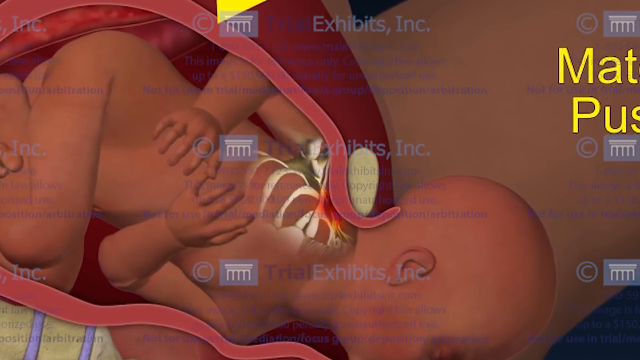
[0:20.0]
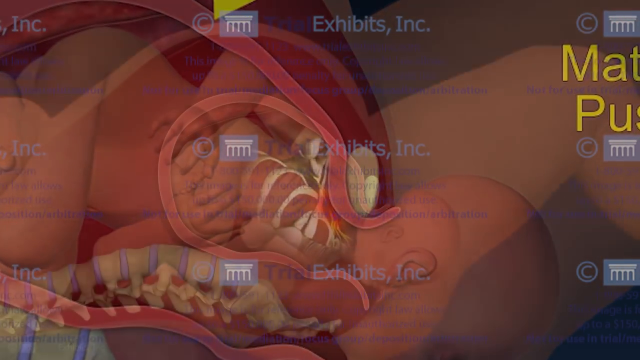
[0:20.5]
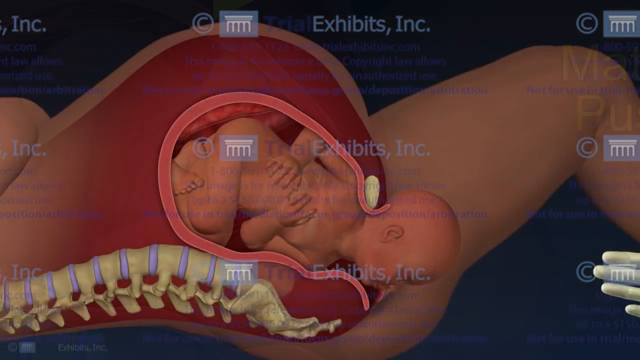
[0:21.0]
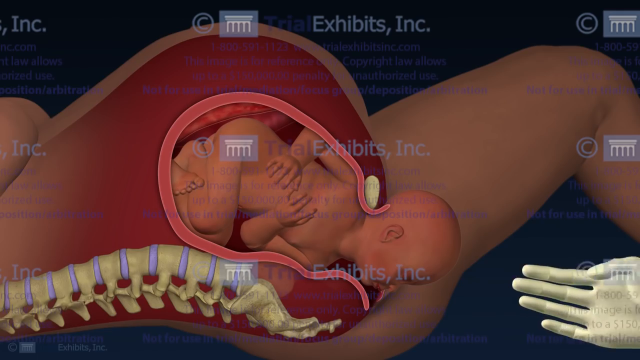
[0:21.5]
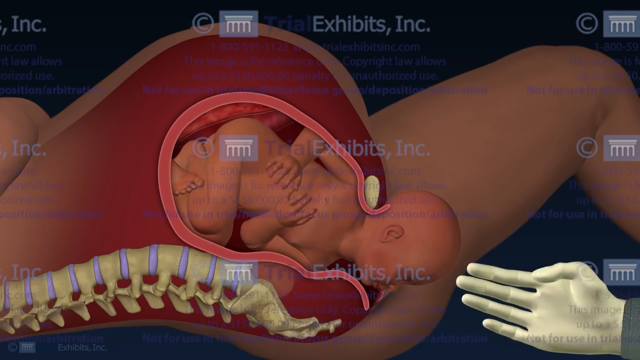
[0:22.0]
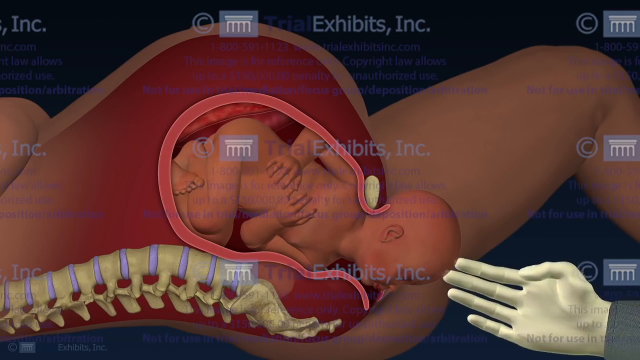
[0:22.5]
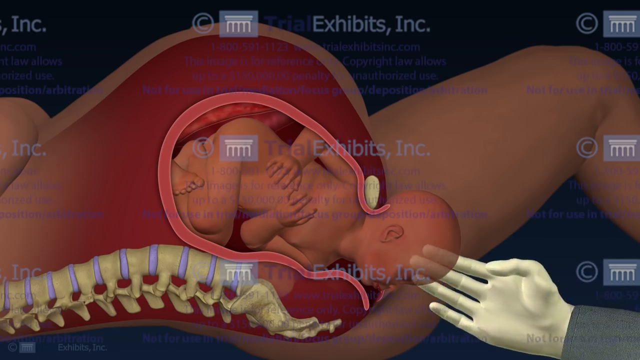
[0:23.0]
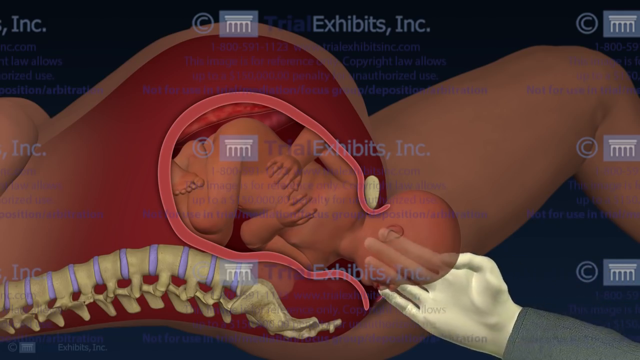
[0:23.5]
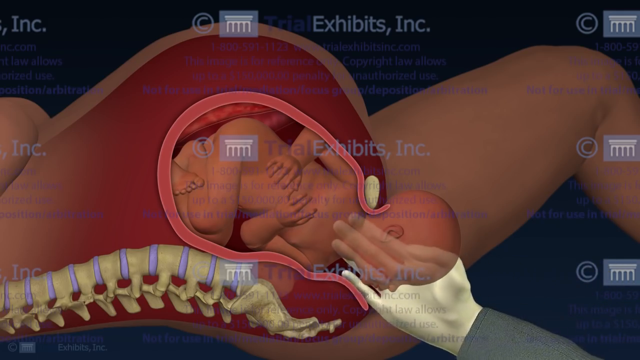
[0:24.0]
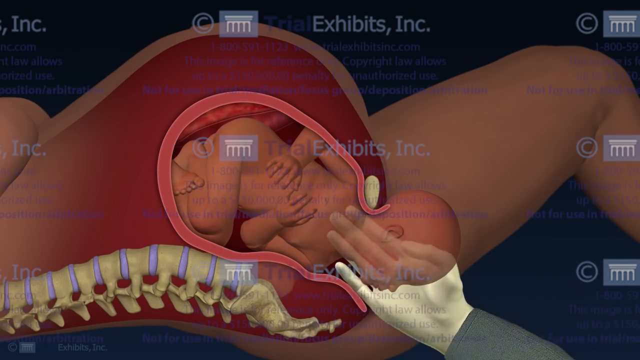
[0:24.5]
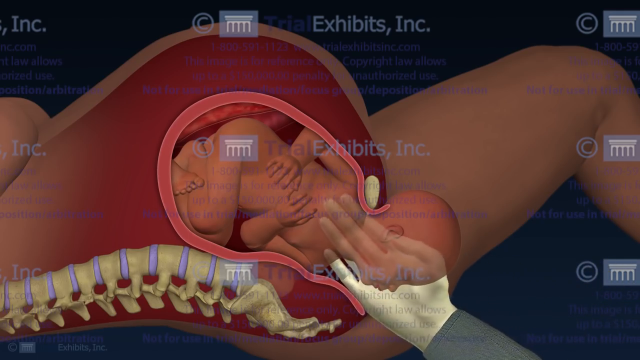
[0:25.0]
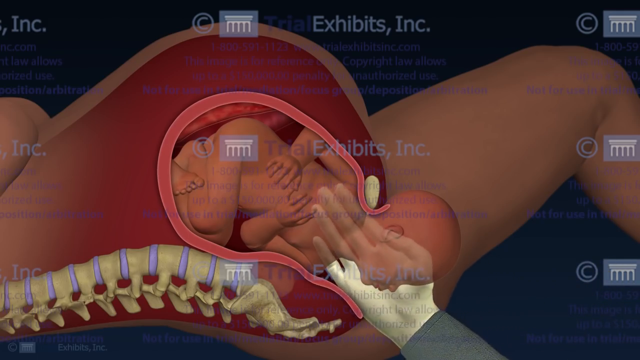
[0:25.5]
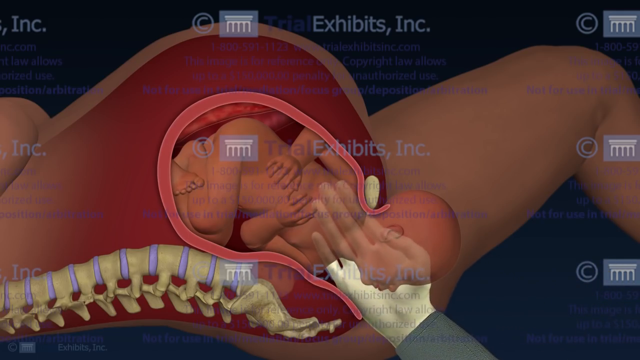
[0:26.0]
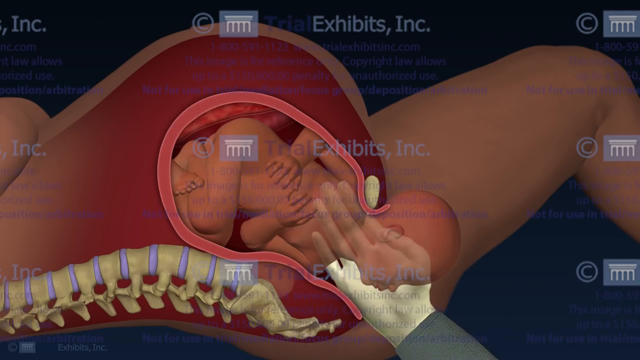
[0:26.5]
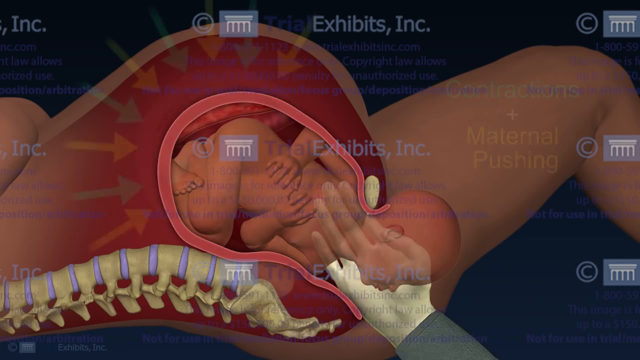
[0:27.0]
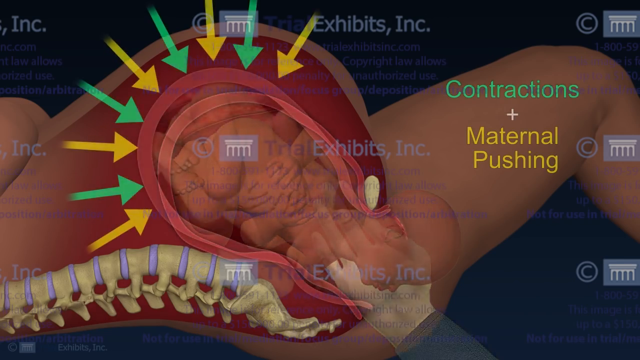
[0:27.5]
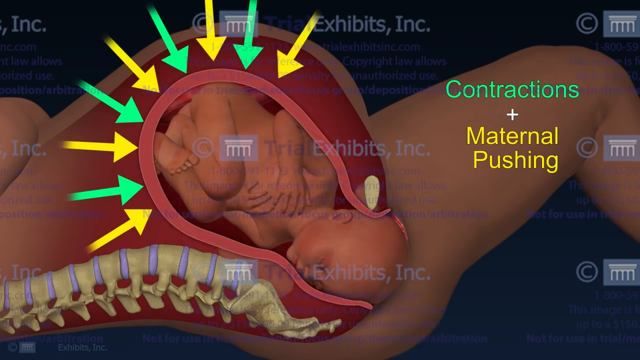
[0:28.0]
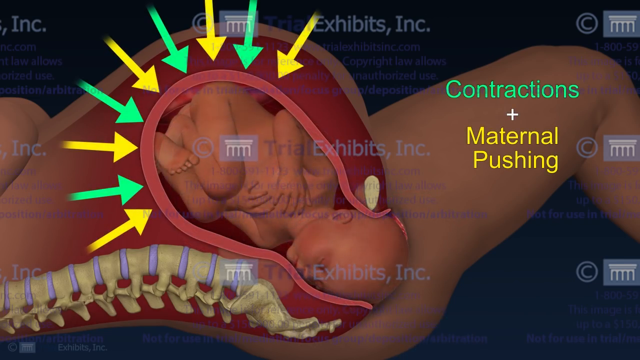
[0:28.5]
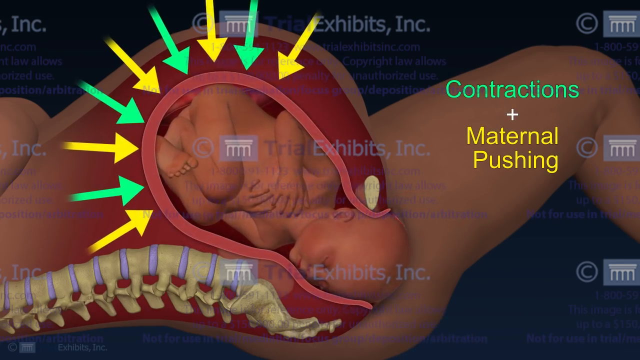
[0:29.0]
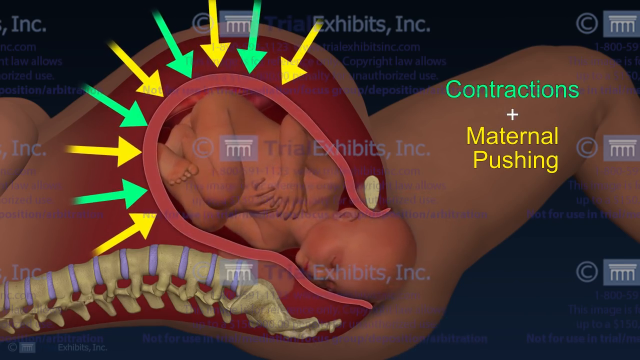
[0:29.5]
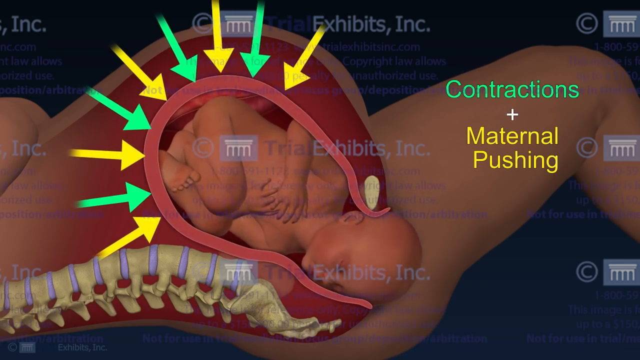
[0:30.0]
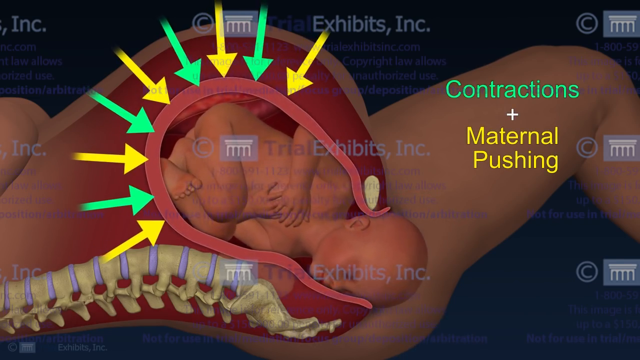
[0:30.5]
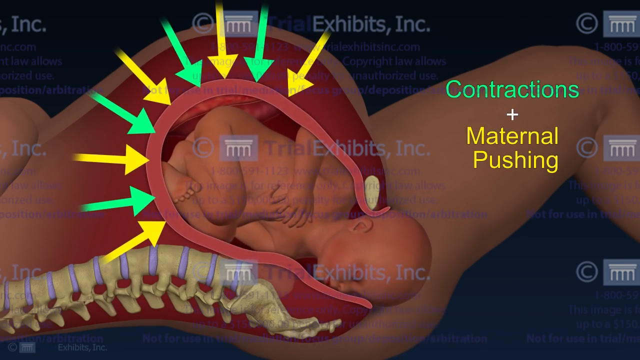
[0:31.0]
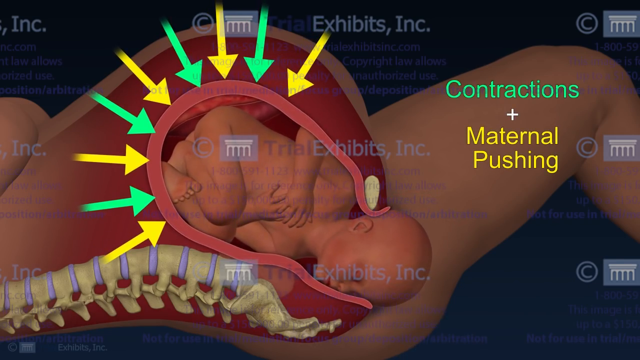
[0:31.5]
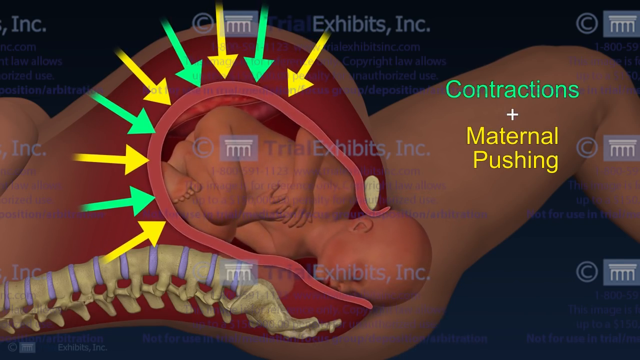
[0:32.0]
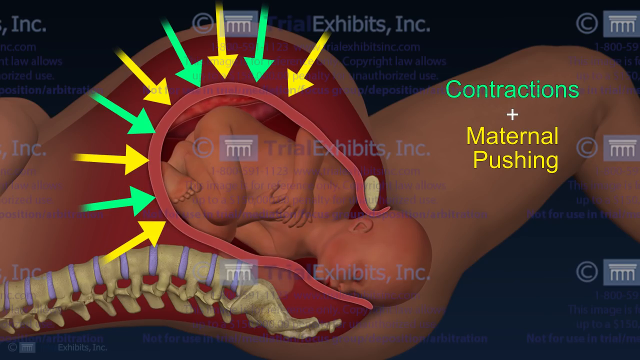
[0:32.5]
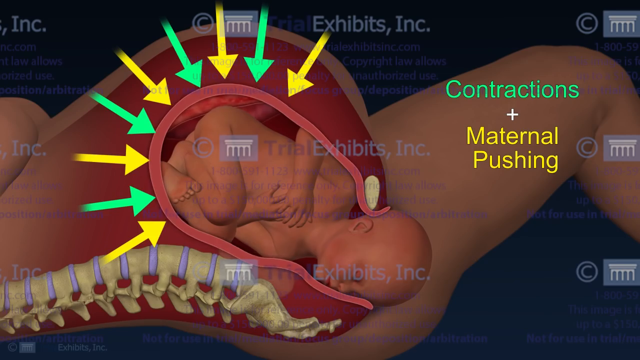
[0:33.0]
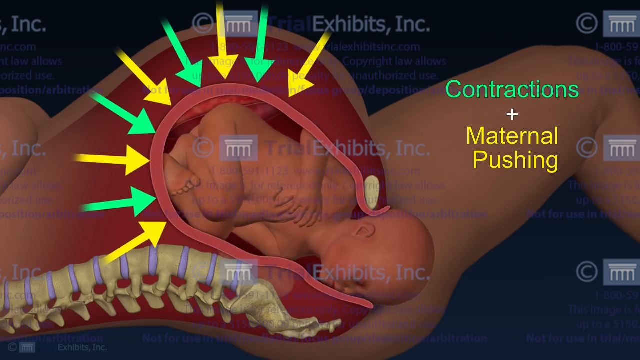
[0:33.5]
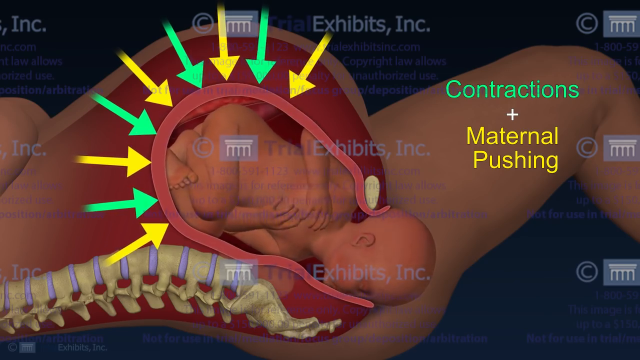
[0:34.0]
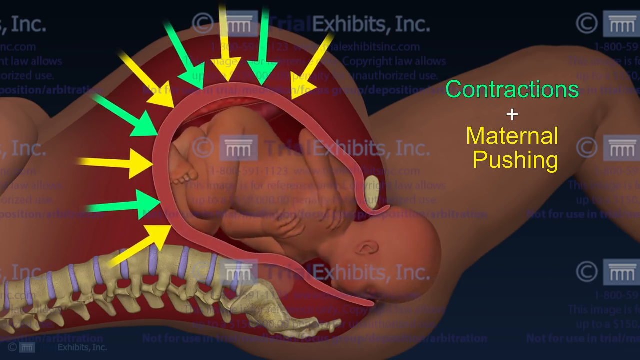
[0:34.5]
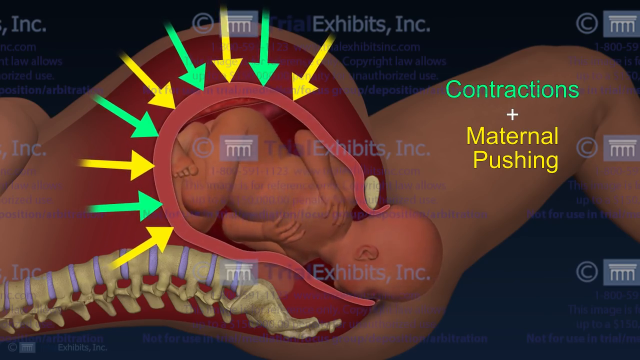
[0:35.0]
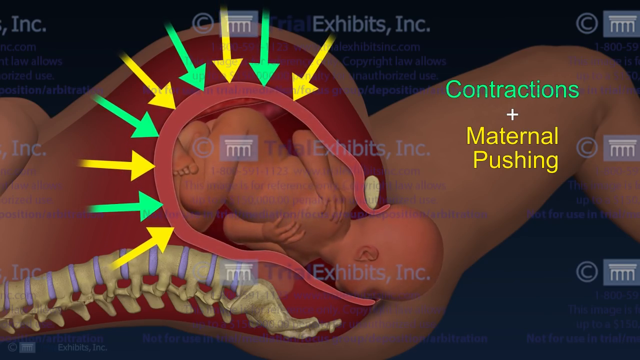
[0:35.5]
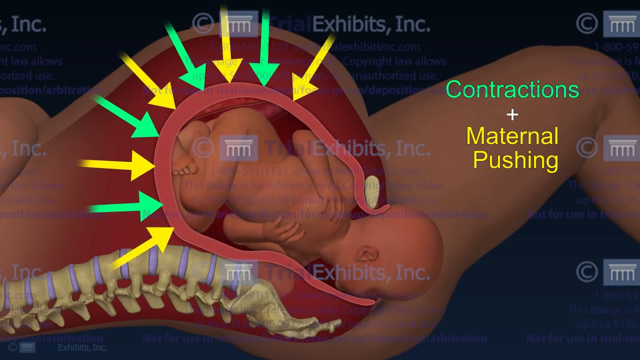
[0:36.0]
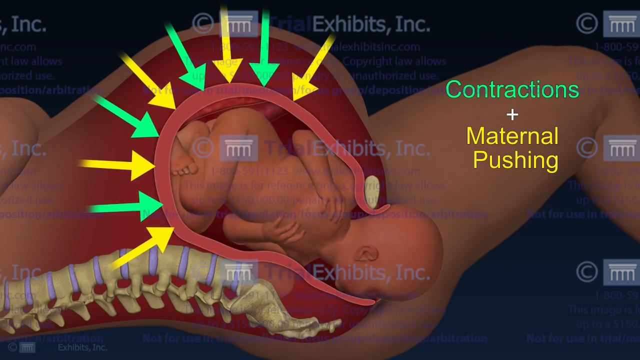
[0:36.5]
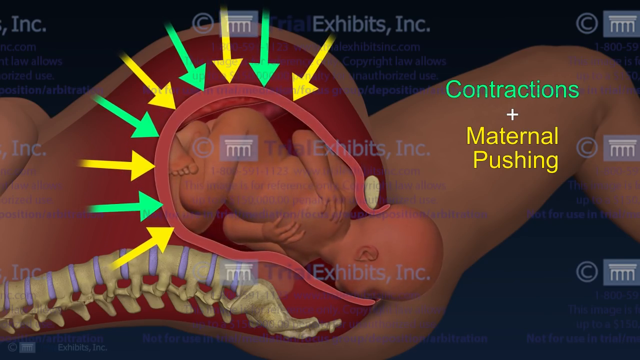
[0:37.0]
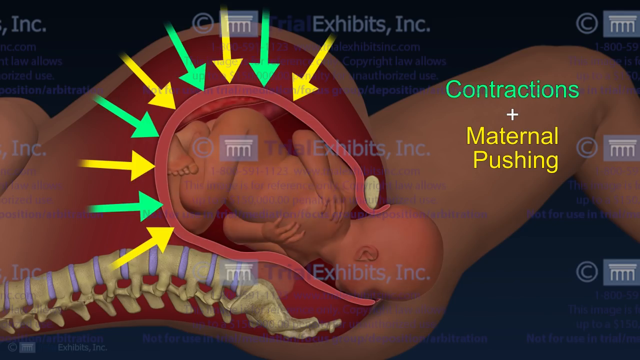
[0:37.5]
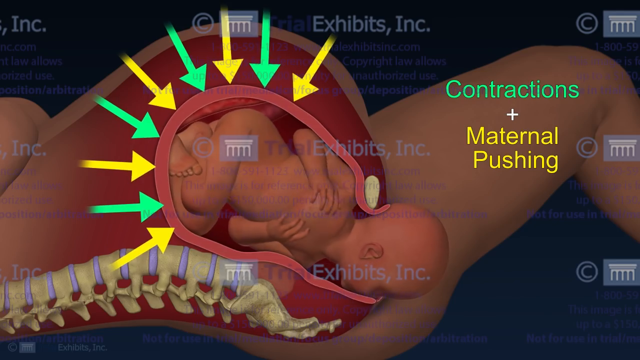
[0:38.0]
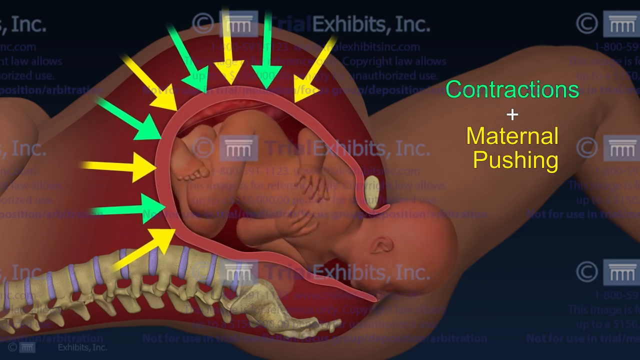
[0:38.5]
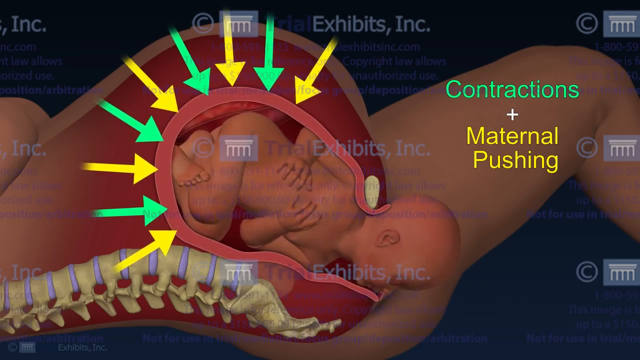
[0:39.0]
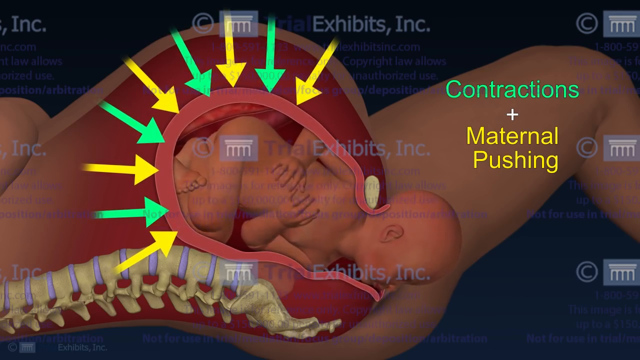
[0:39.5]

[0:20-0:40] The animation continues, zooming out from a tighter, closer shot to a wider one as it kind of fades in. A hand kind of comes underneath the region of the head to support it, shown almost up inside the embryo. The animation then returns to the baby inside the mother, who is lying on her back, seen from the side with her spine closest to the viewer. The baby has its butt up in the air and rests on the left side of its face. The arrows push down, and the baby is pushed through, turning until it faces down. Its legs are crossed, almost crisscross, and it looks bunched up, as if ready to come out. Its hands no longer rest over the stomach as much because they are pushed down along the sides. The baby keeps getting pushed down, and the view zooms into the area showing the opening more; the head is now through, while the neck and everything below it is still inside.